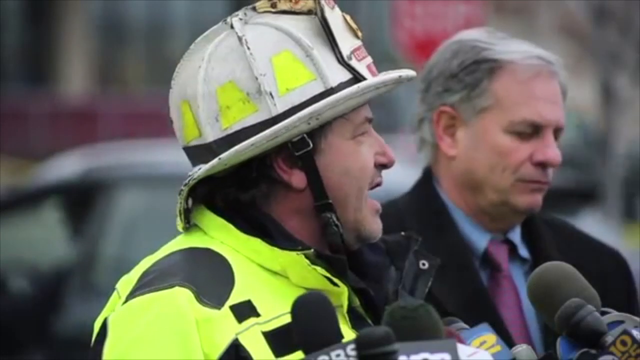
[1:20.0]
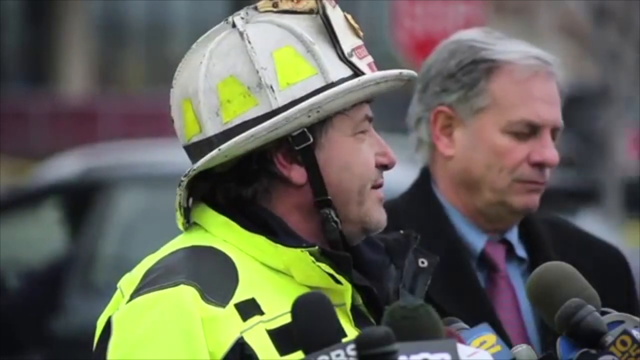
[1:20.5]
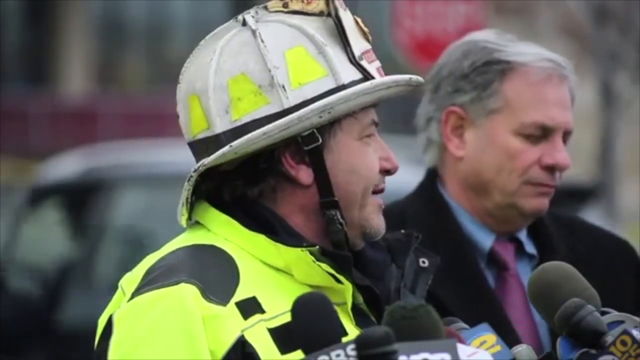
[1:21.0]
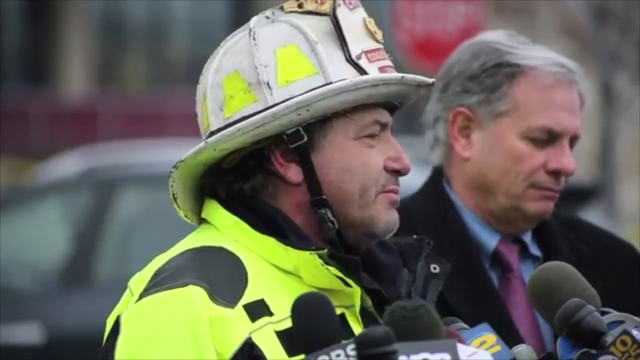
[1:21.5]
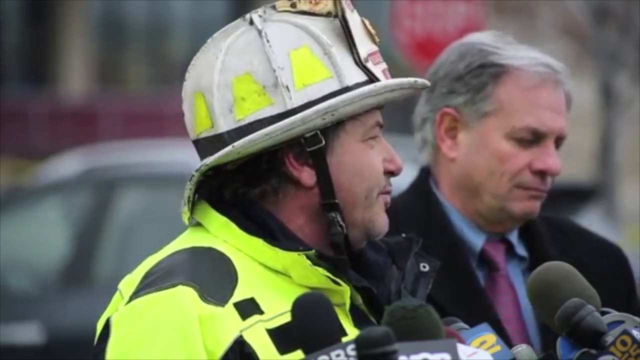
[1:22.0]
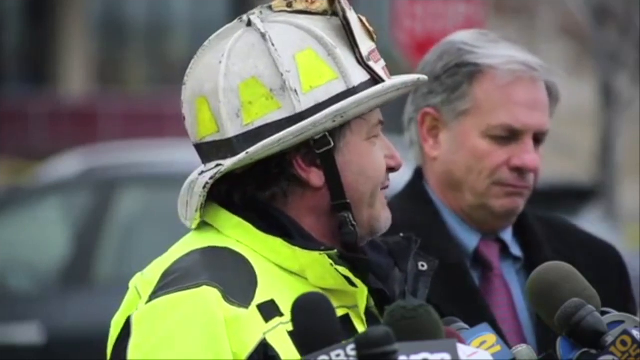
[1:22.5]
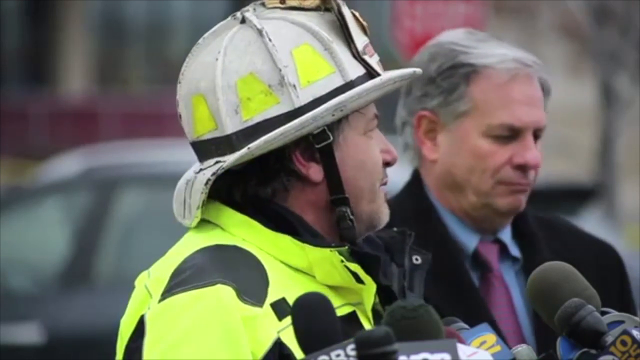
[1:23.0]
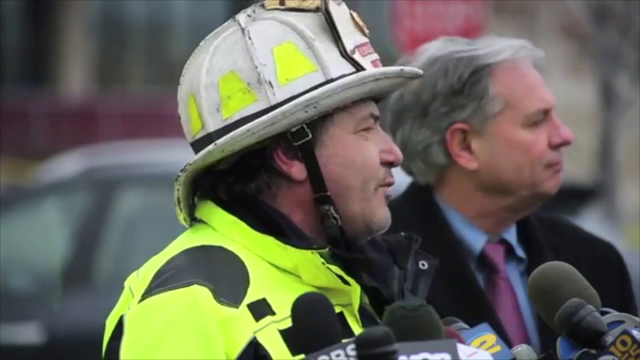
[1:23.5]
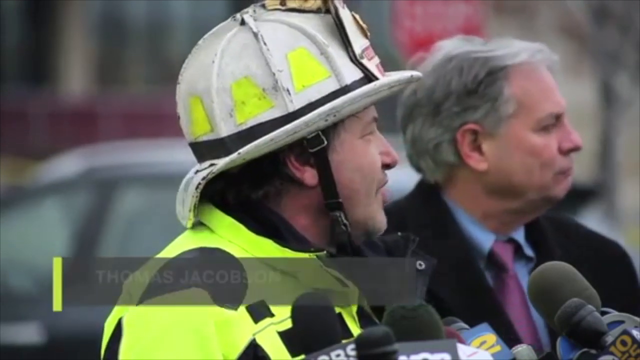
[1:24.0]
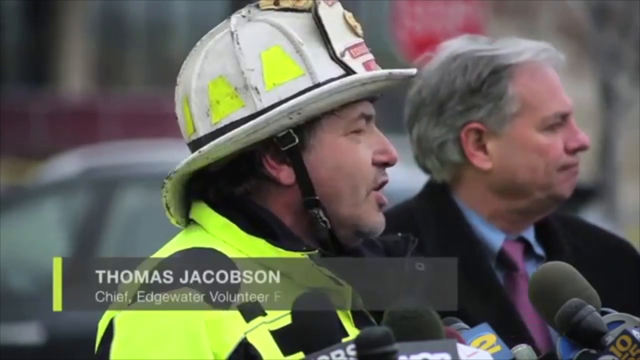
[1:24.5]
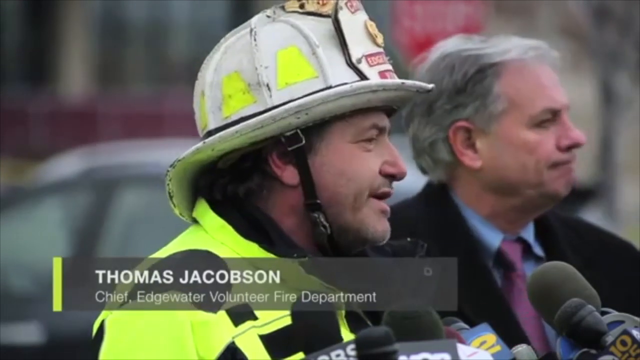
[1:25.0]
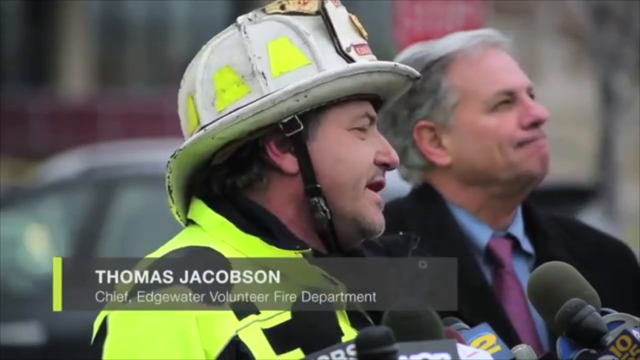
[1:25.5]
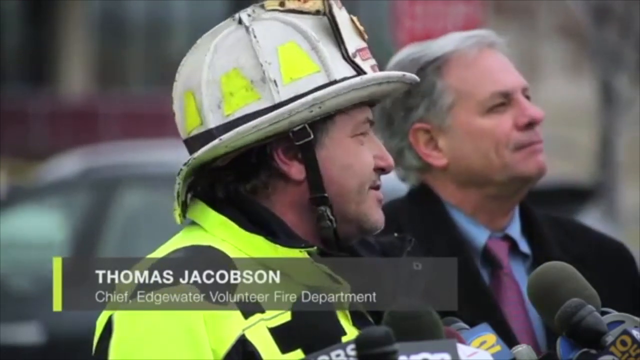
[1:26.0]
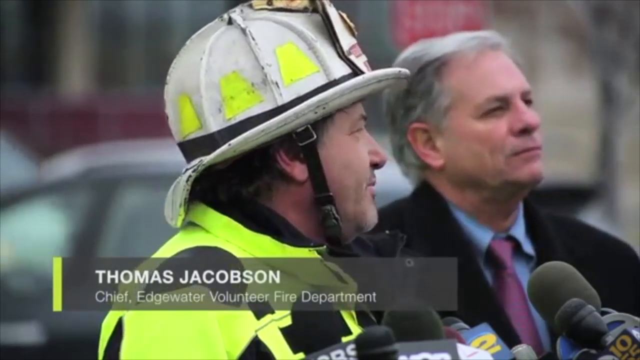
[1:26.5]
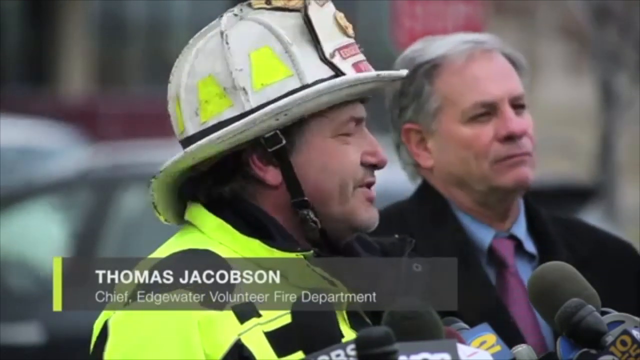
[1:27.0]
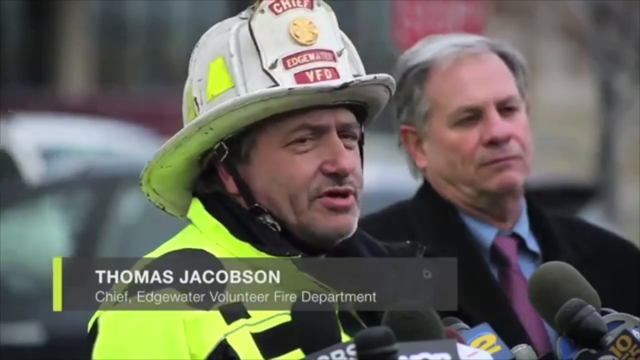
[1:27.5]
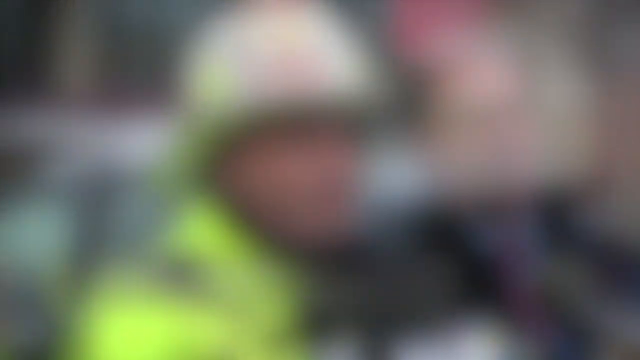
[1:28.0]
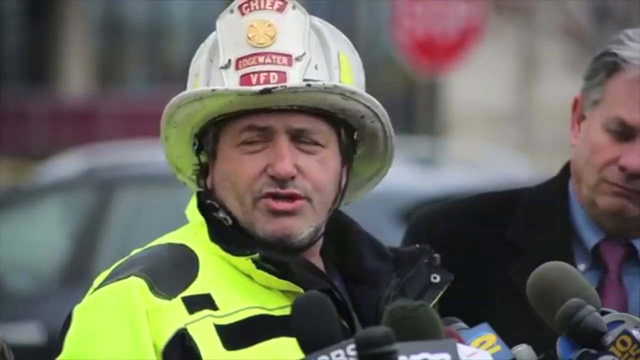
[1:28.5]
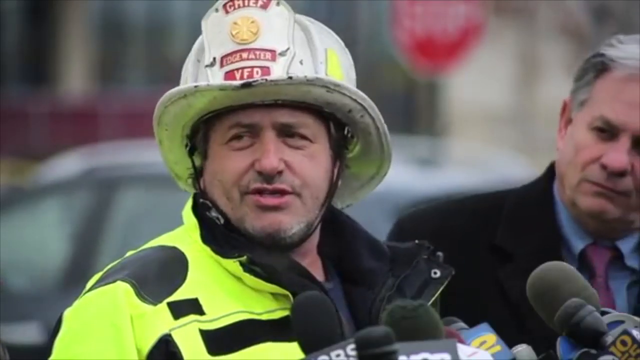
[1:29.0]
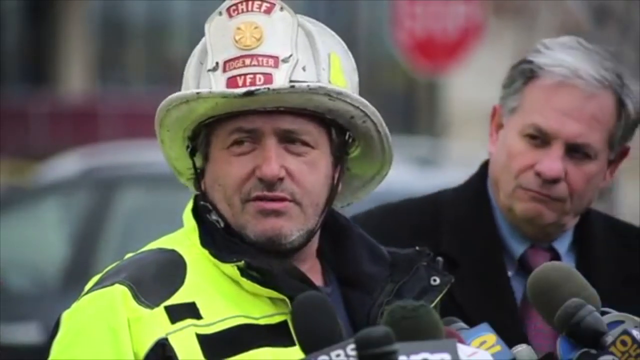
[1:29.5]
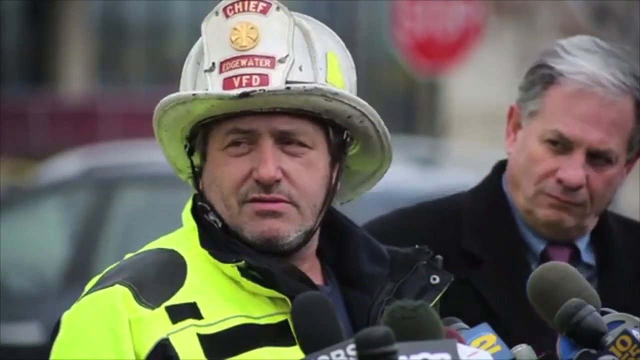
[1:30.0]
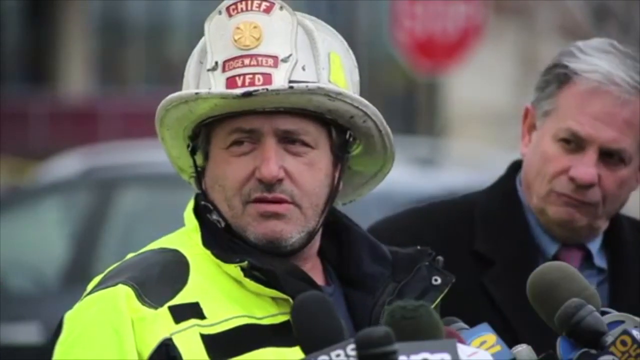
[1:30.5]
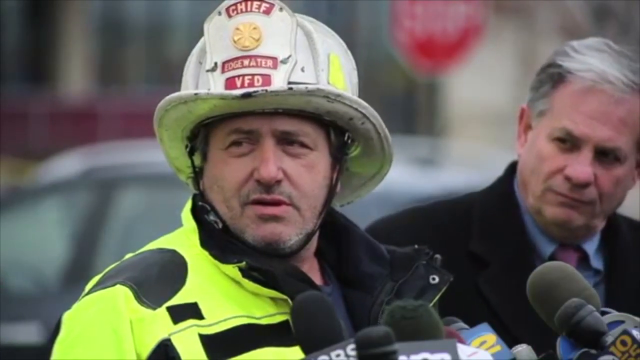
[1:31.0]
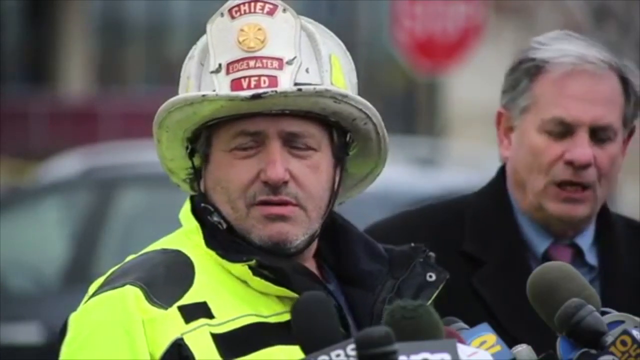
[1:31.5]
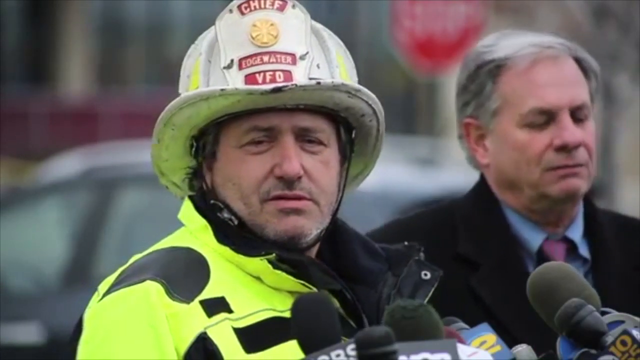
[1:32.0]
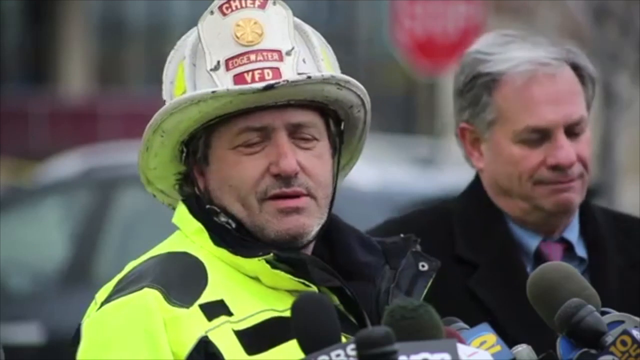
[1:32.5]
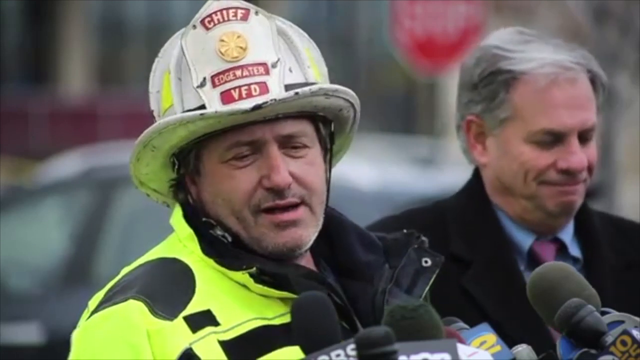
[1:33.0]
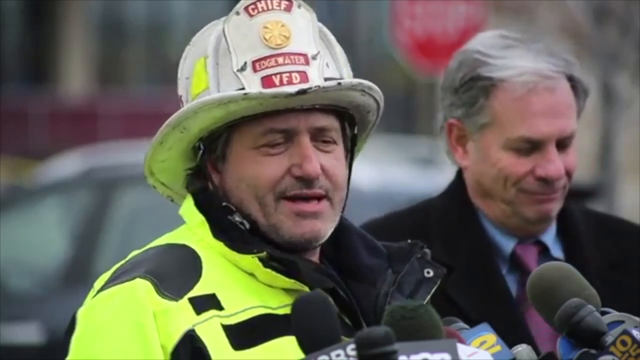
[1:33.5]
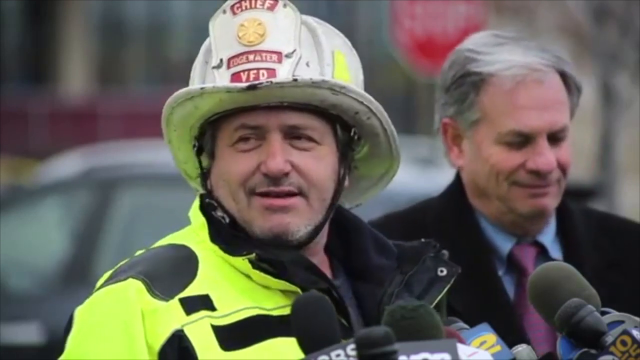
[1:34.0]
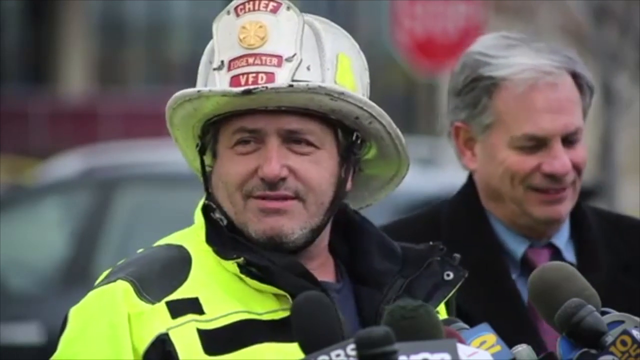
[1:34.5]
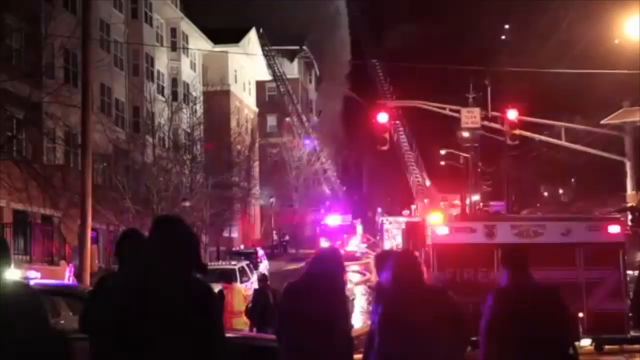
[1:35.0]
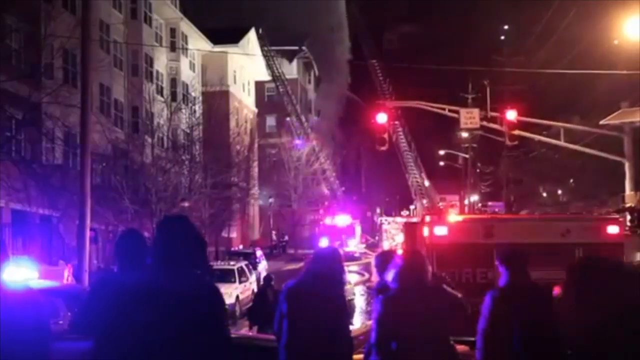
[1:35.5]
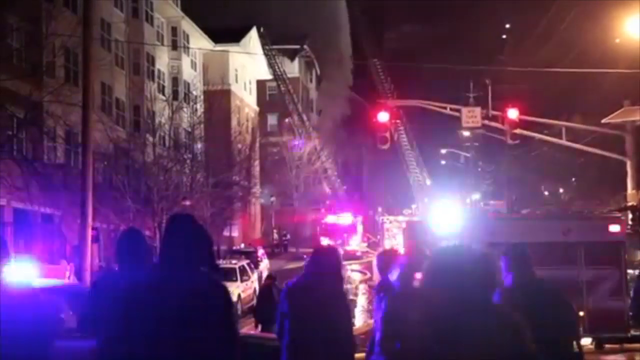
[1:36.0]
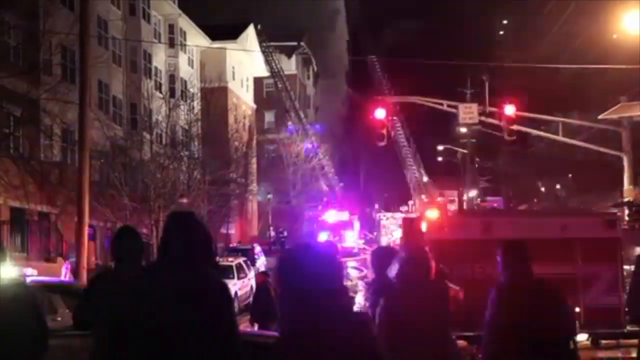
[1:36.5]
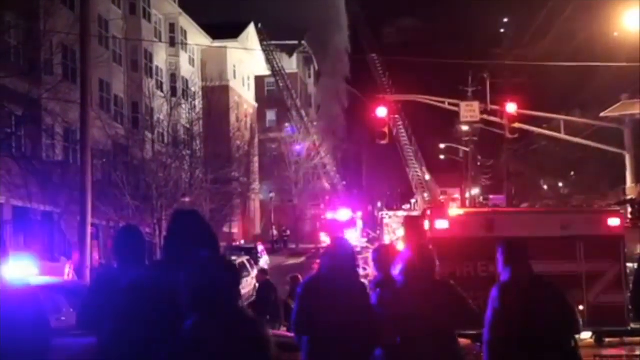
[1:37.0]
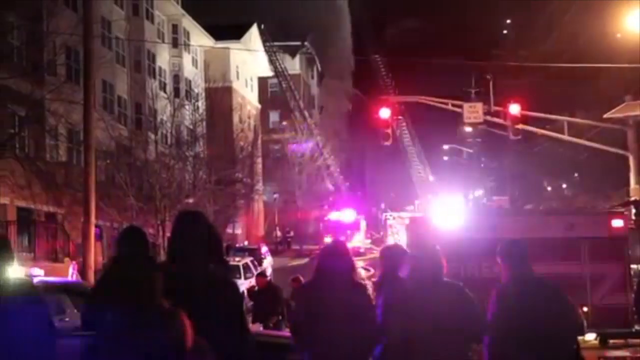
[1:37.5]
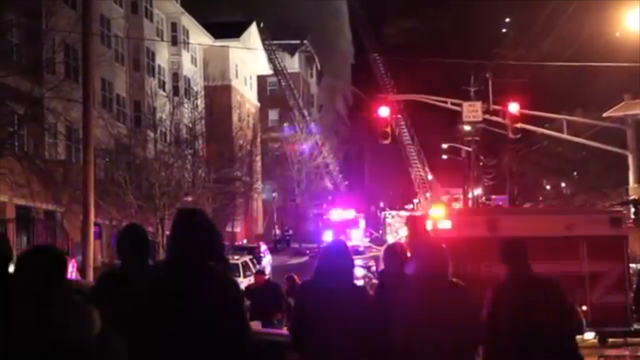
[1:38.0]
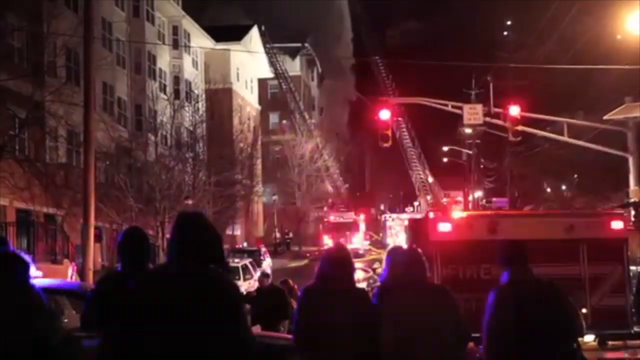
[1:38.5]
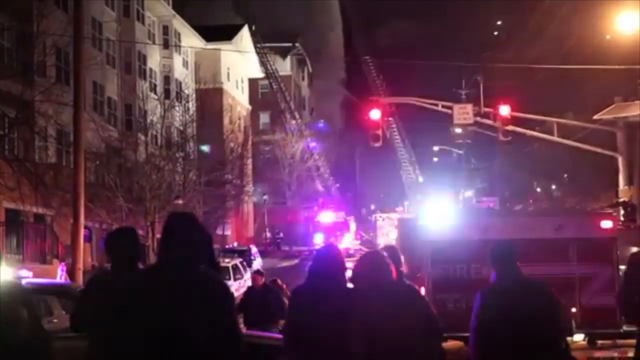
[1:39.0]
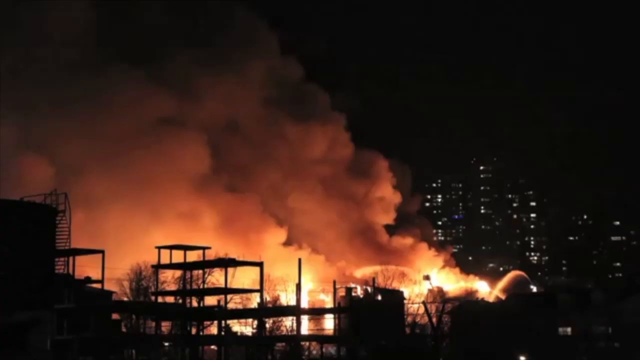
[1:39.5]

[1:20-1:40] A close-up shows two men talking to reporters, with microphones in front of them. The man on the right is an older man with gray hair, wearing a blue shirt, a tie and what looks like a black suit jacket. The man on the left, who is talking into multiple microphones, wears a yellow safety vest and a white and yellow hard hat with a chin strap. A banner pops up over him reading "Thomas Jacobson, Chief Edgewater Volunteer Fire Department." The next shot is a close-up of him talking, where the front of his hat reads "Chief Rockwater VFD" and bears a firefighter symbol. After a few seconds of him talking, the video cuts to a ground-level shot of the fire showing multiple fire trucks, red lights, a "no turn on red" sign, and people standing around watching.